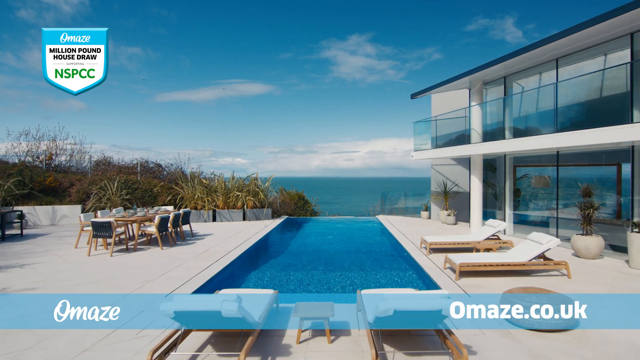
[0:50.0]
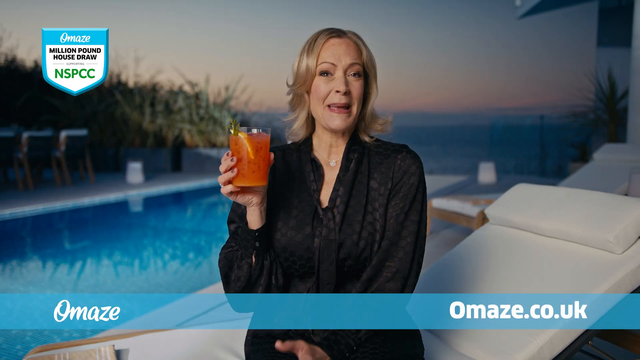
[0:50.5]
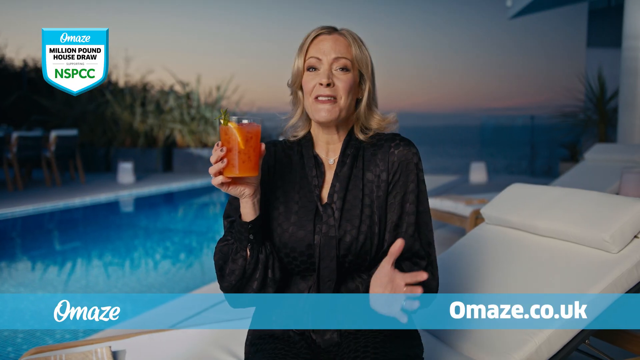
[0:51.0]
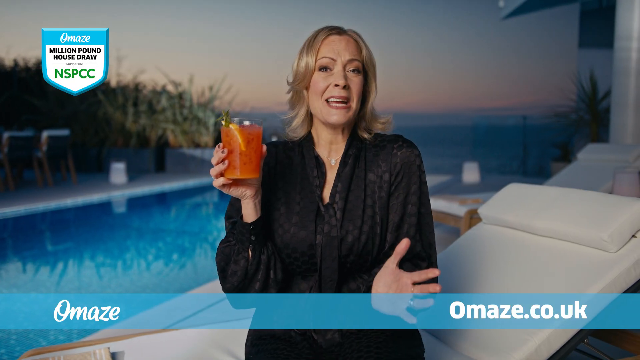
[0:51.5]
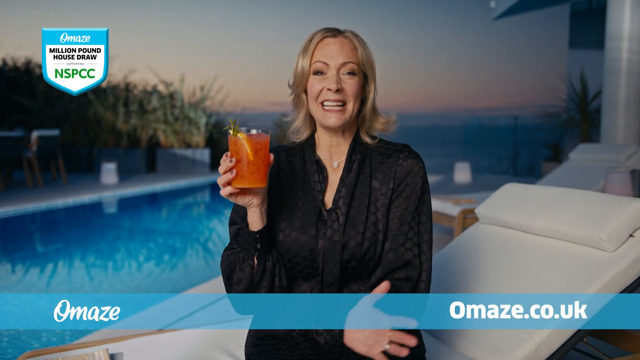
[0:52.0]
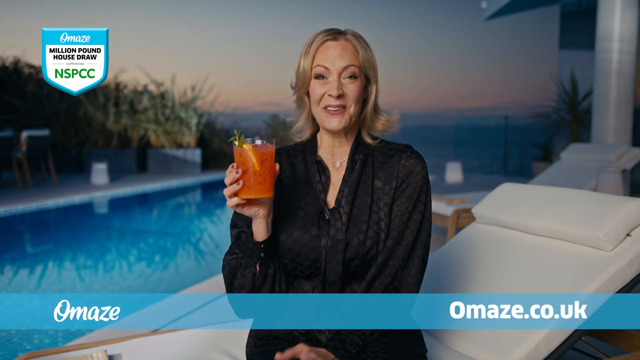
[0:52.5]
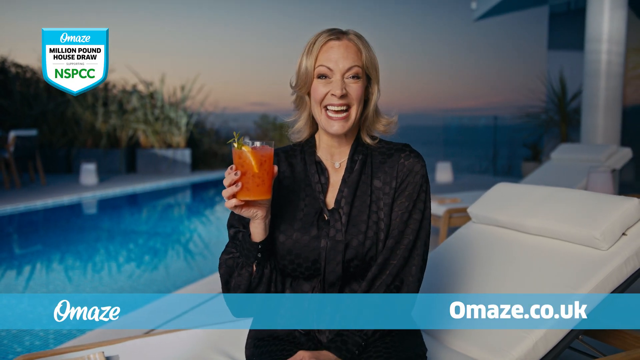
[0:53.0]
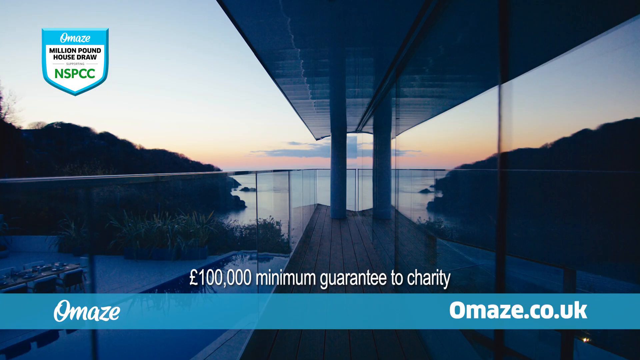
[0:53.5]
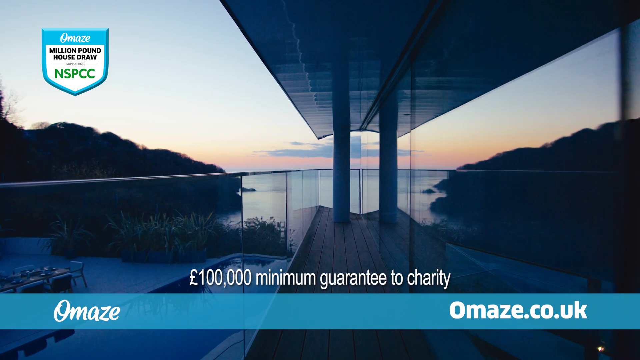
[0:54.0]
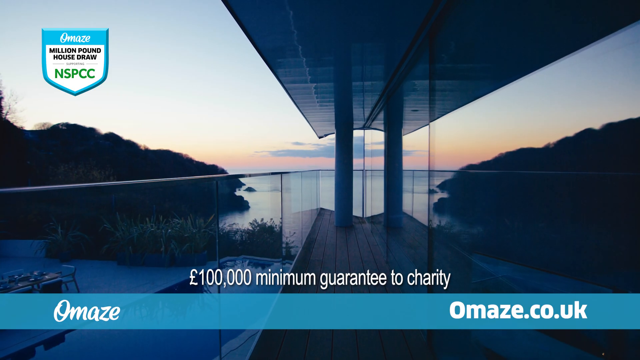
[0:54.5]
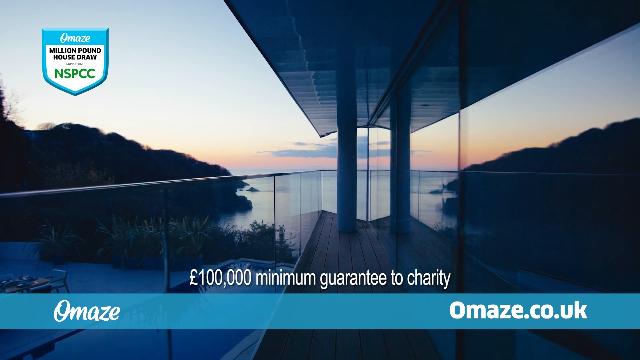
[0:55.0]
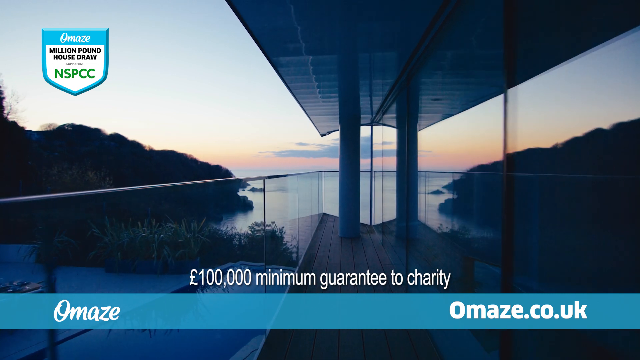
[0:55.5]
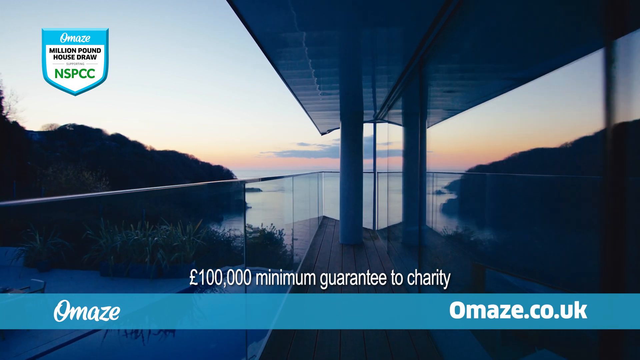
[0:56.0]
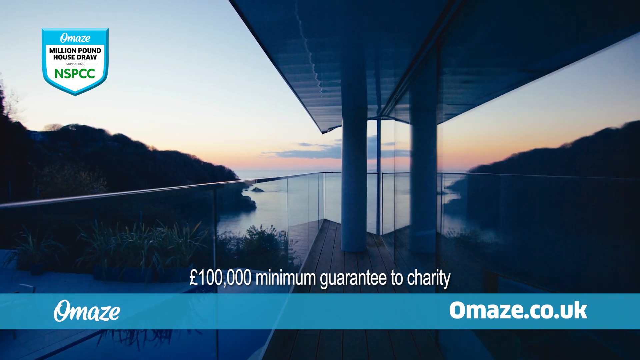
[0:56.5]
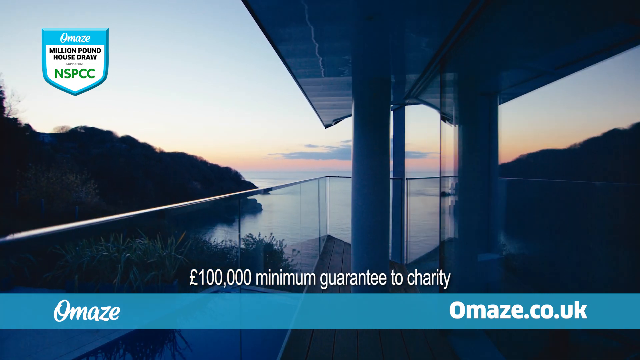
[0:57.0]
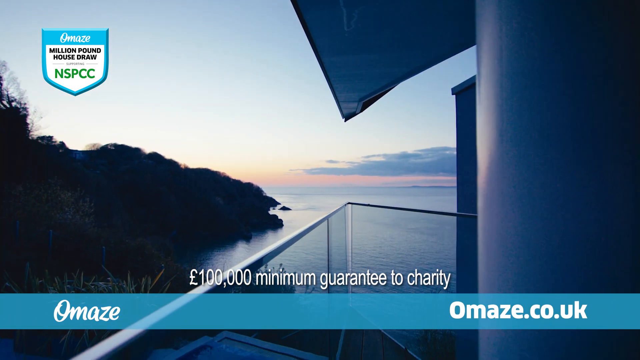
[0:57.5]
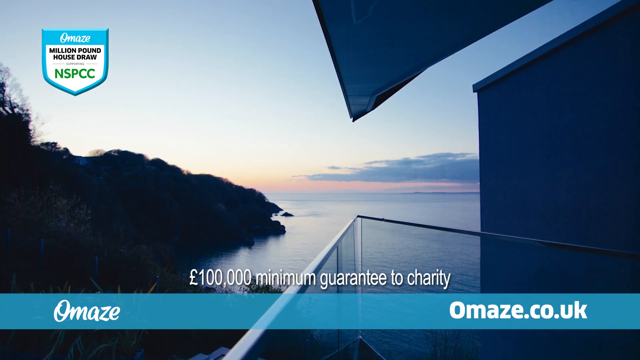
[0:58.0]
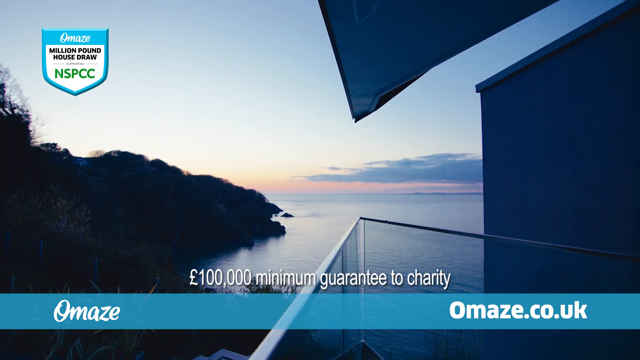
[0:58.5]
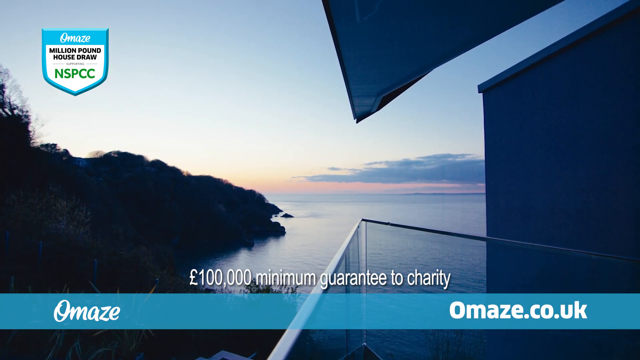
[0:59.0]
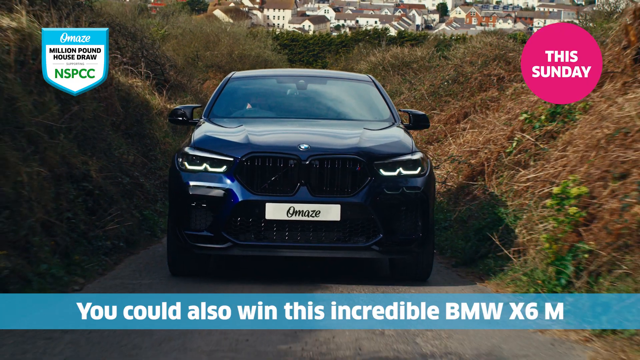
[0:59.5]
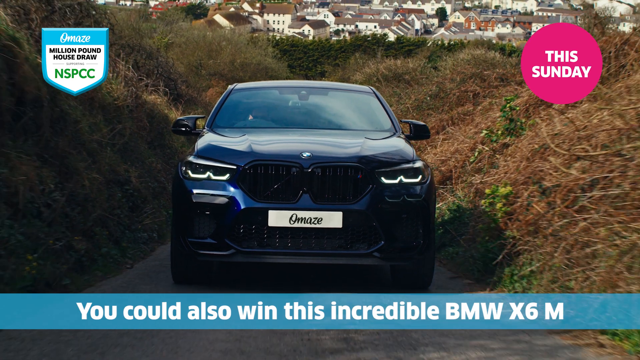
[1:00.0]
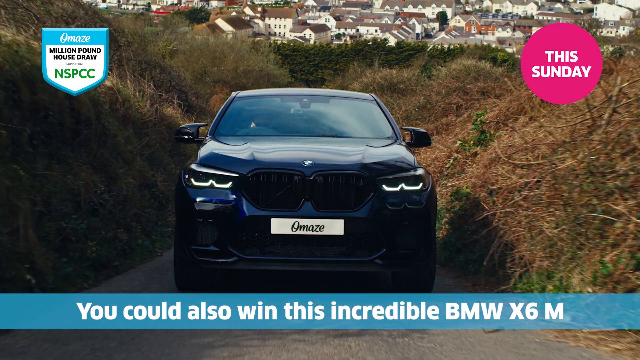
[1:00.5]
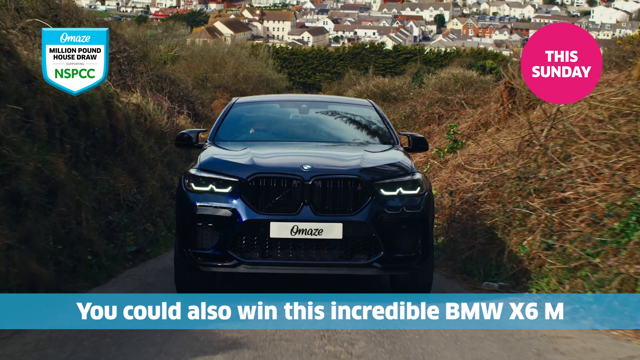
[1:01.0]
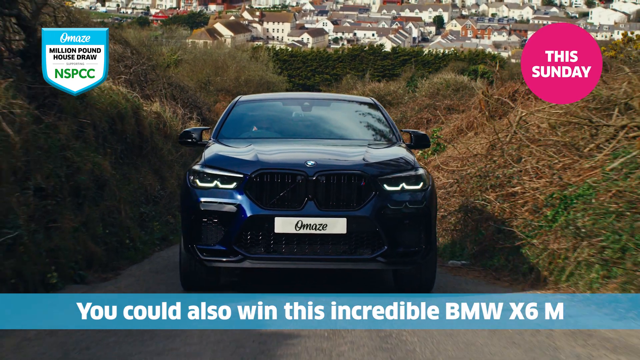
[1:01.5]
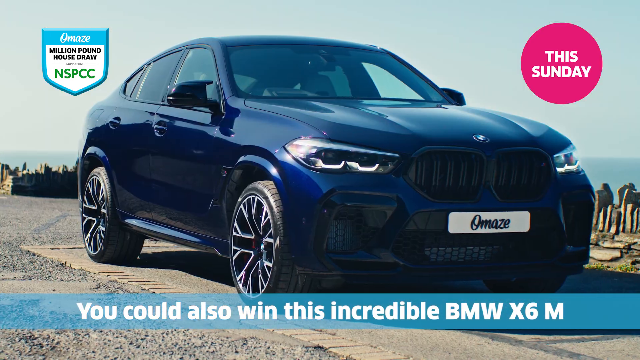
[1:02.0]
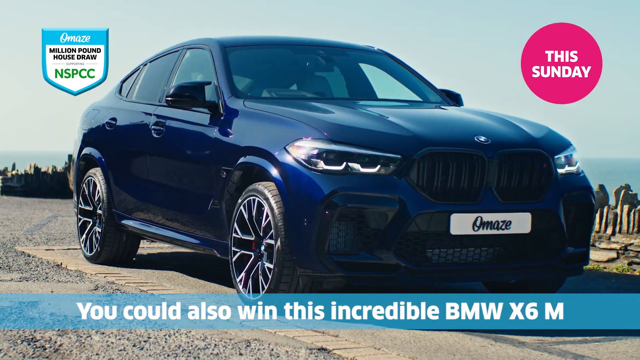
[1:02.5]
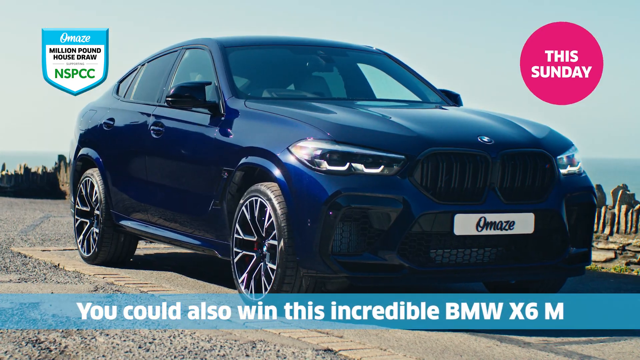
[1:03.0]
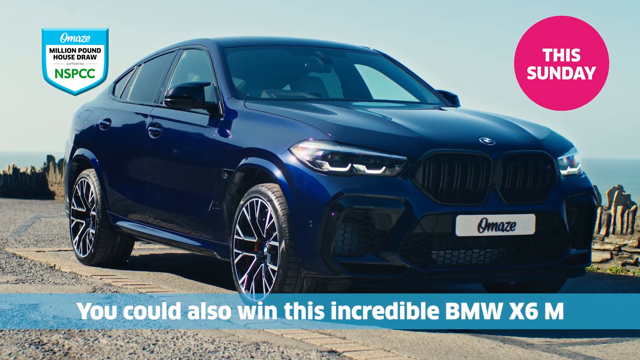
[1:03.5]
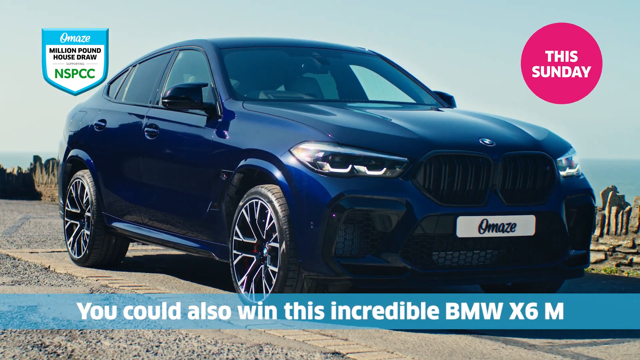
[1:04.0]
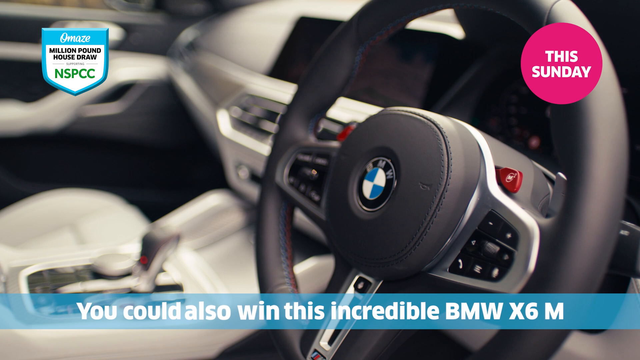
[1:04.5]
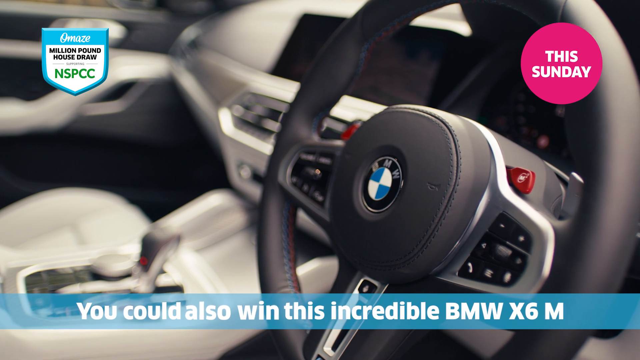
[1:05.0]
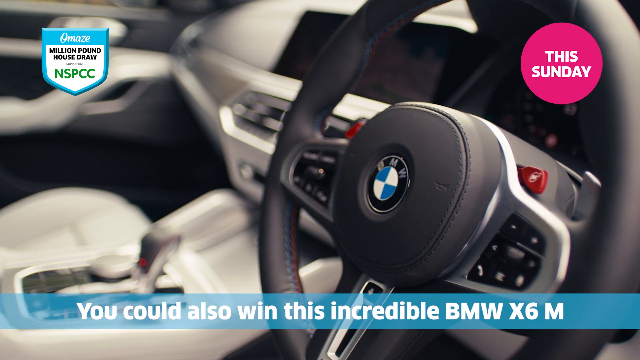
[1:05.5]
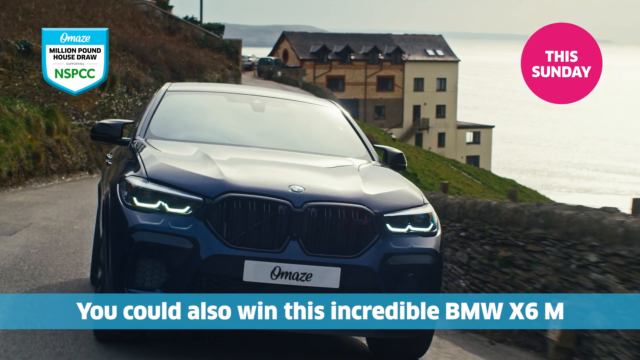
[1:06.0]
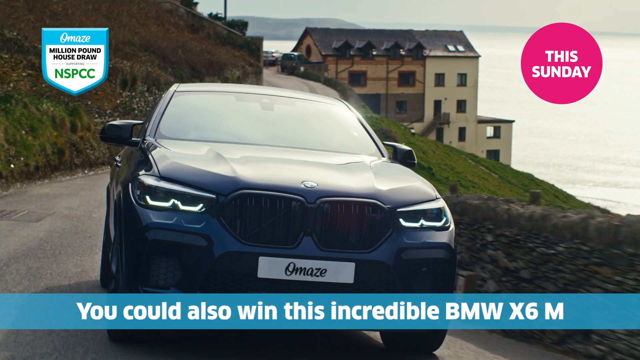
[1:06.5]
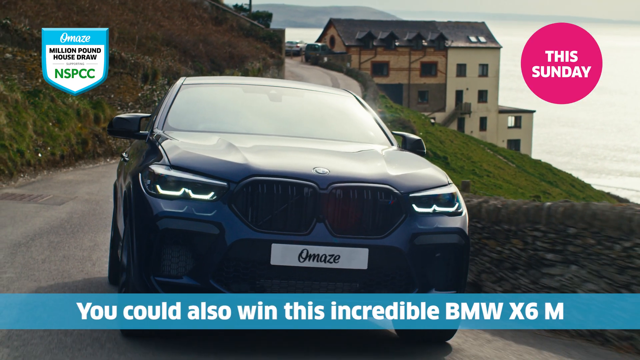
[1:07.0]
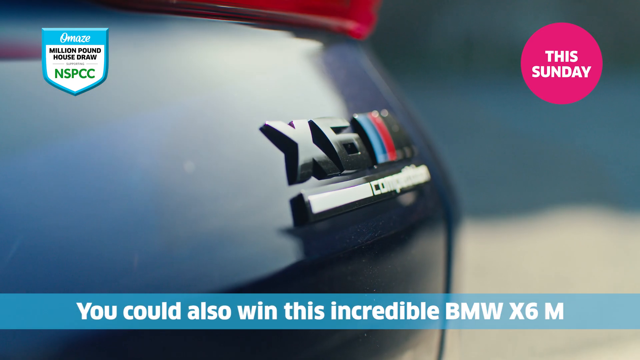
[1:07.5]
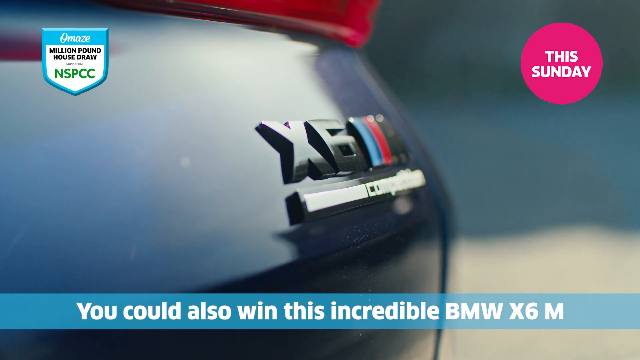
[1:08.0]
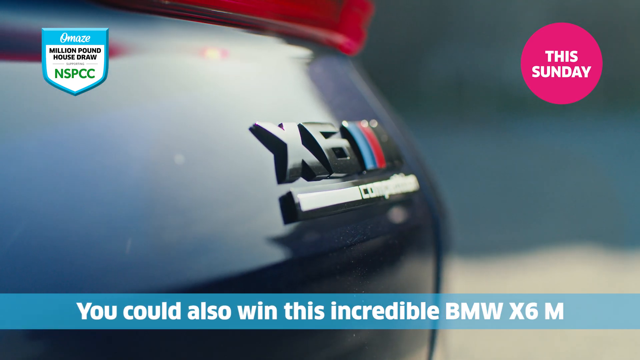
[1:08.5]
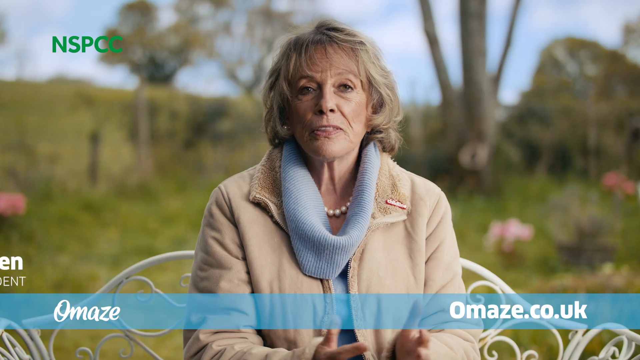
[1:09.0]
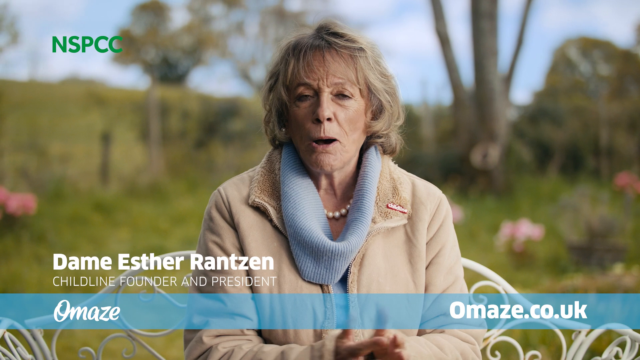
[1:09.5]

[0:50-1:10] A woman with a light complexion and blonde, shoulder-length hair holds a glass. The scene changes to a luxurious car driving in. An older woman who appears to be in her late 50s is also talking. They are at a resort, and it seems to be late evening, as it is starting to get a bit dark. The text "you could also win this incredible BMW X6 M" is visible. The resort has a swimming pool and a dining area under the sun. The text "Amazon" is also visible, written in white.